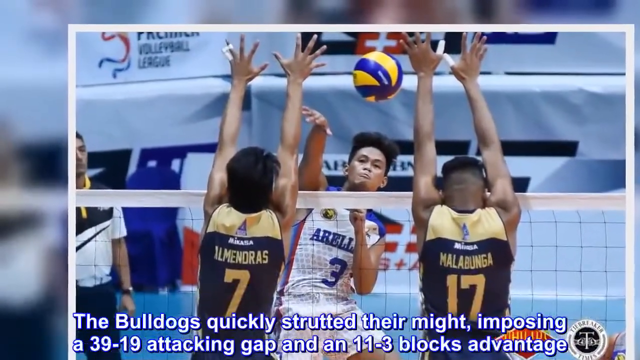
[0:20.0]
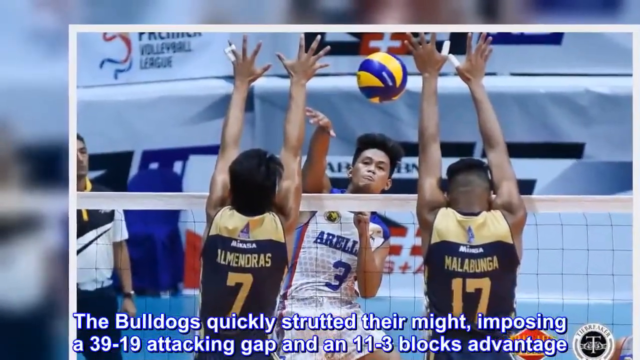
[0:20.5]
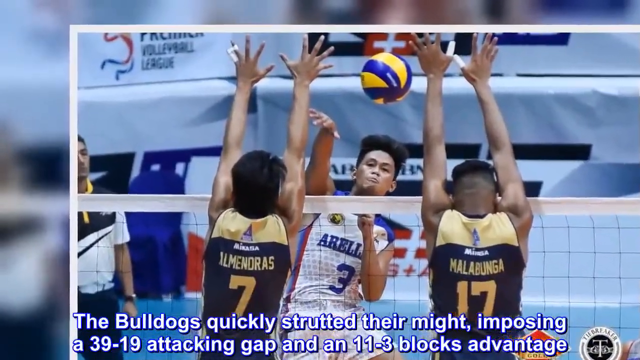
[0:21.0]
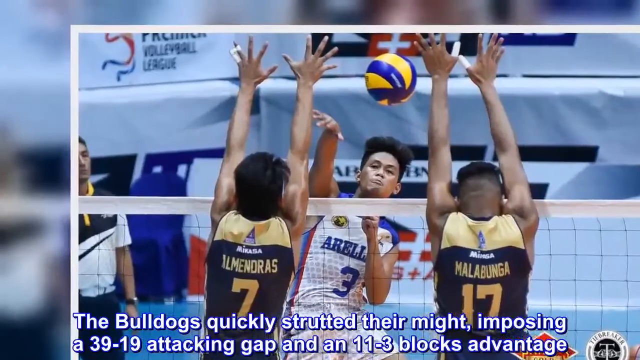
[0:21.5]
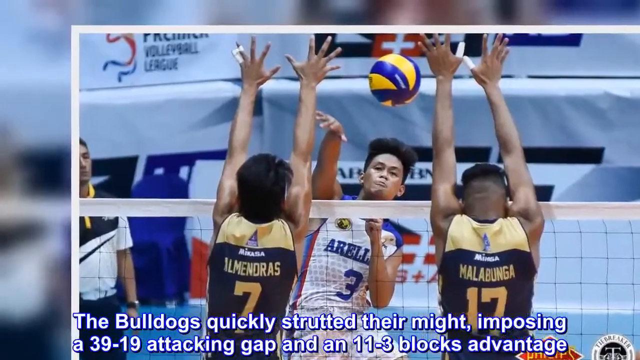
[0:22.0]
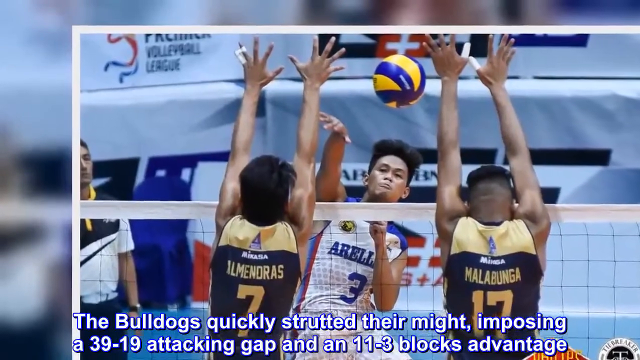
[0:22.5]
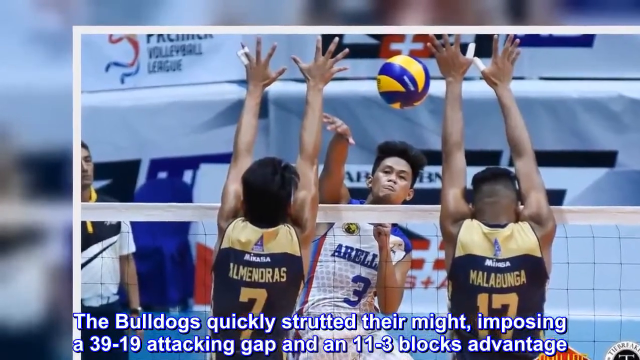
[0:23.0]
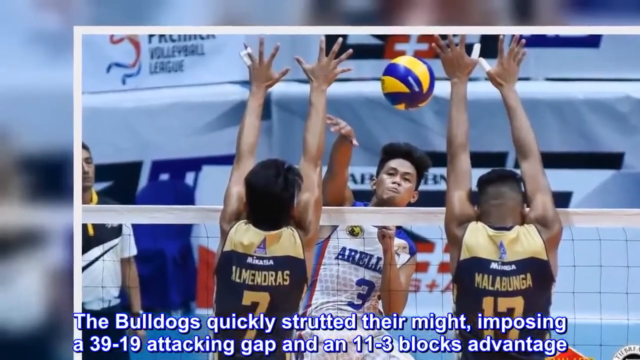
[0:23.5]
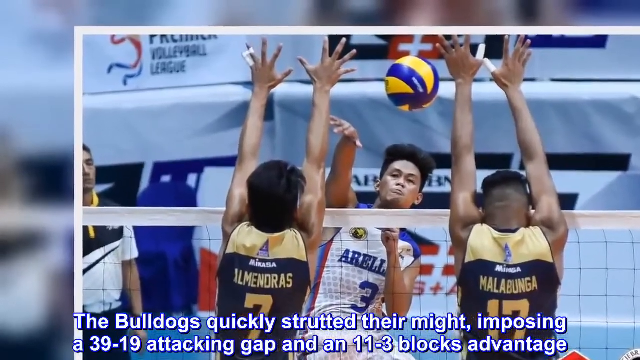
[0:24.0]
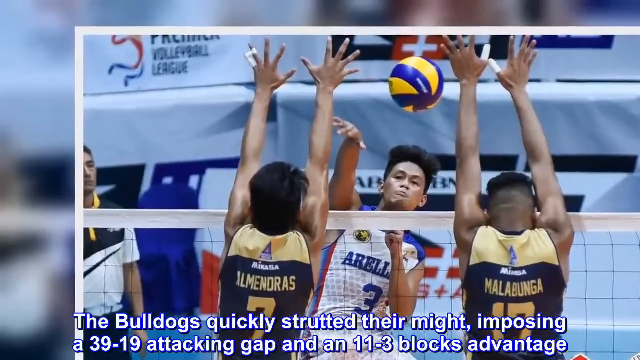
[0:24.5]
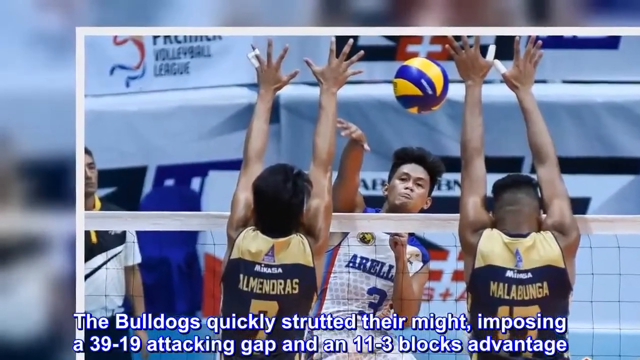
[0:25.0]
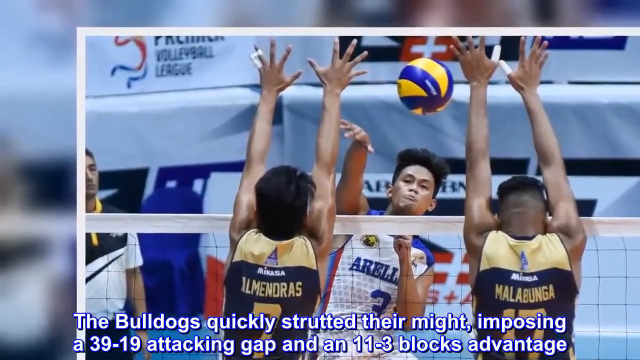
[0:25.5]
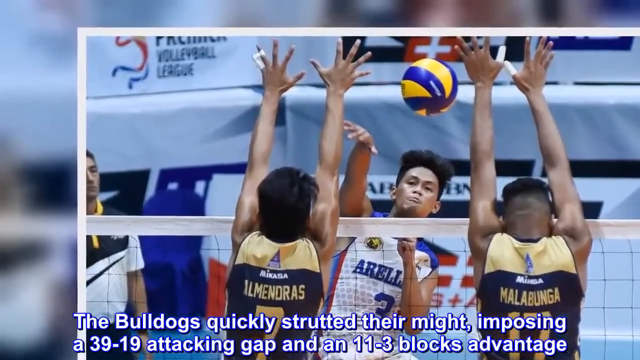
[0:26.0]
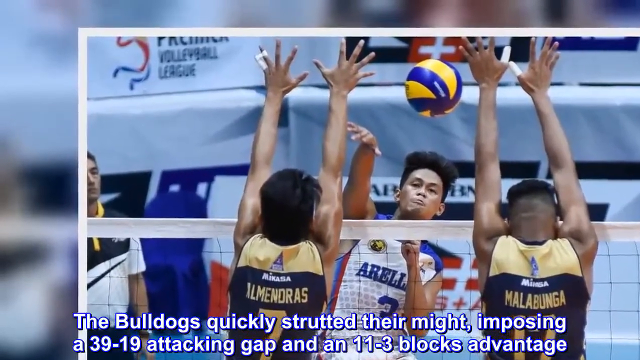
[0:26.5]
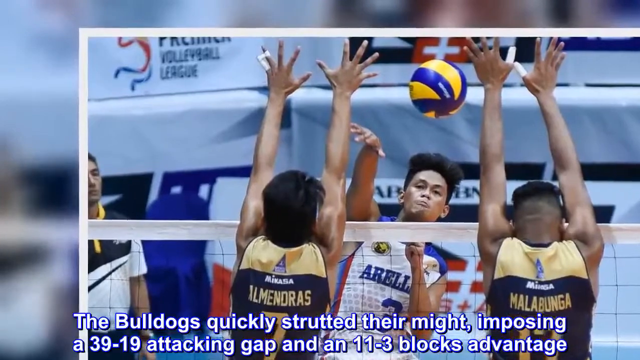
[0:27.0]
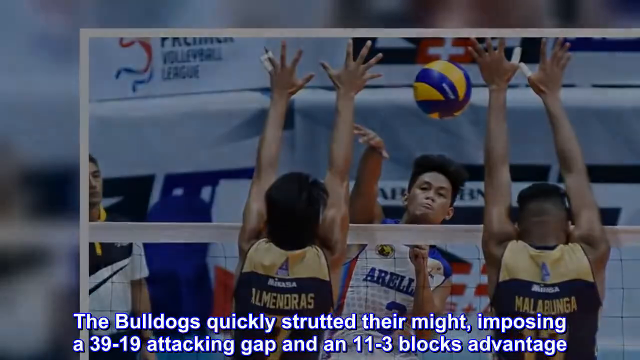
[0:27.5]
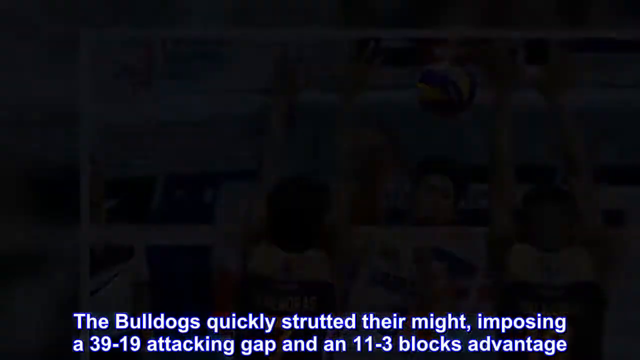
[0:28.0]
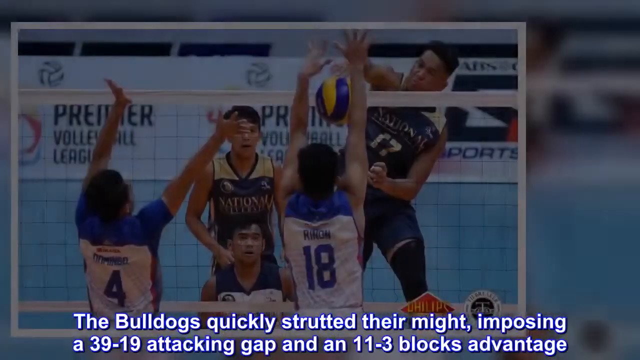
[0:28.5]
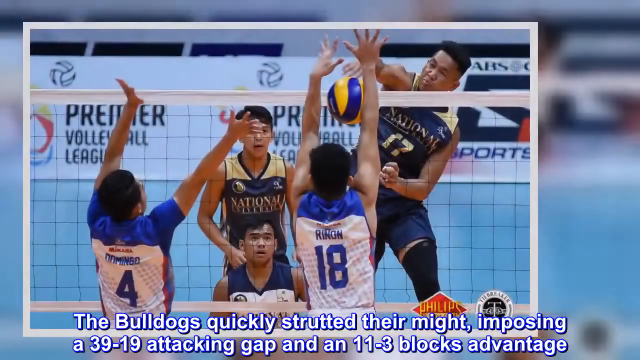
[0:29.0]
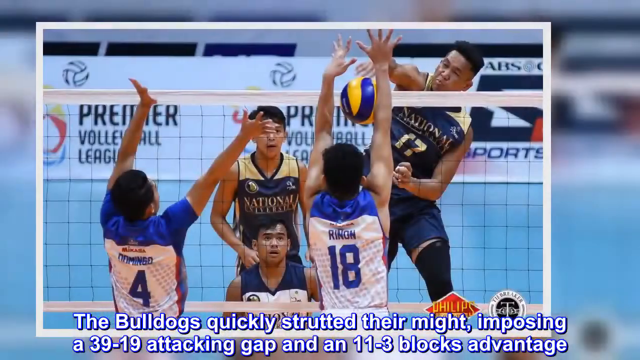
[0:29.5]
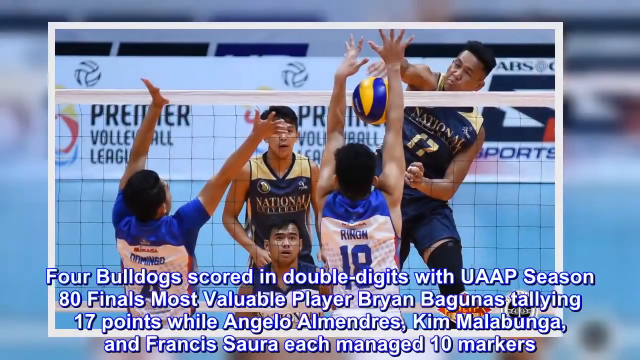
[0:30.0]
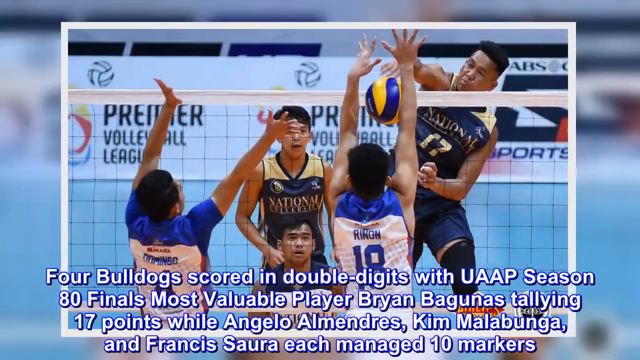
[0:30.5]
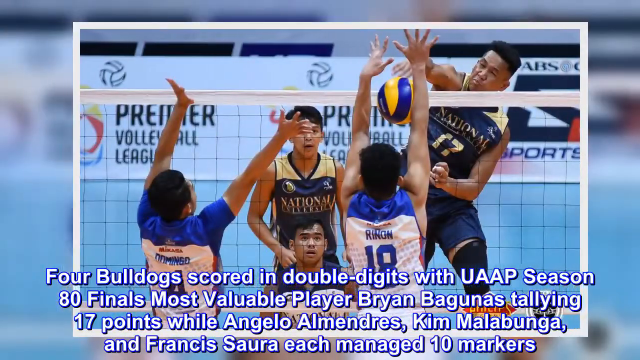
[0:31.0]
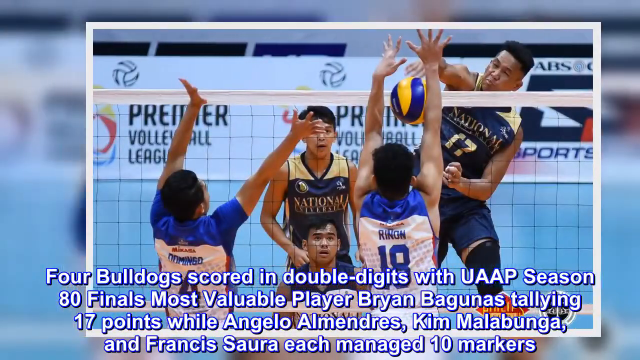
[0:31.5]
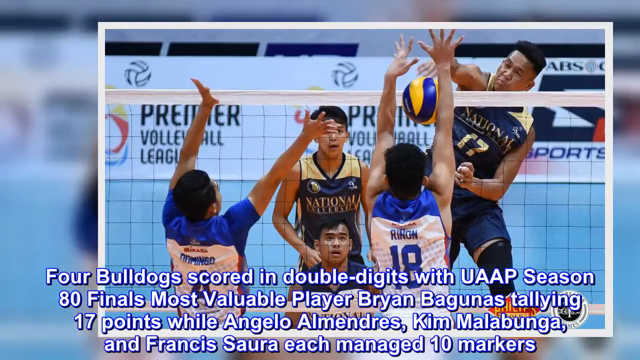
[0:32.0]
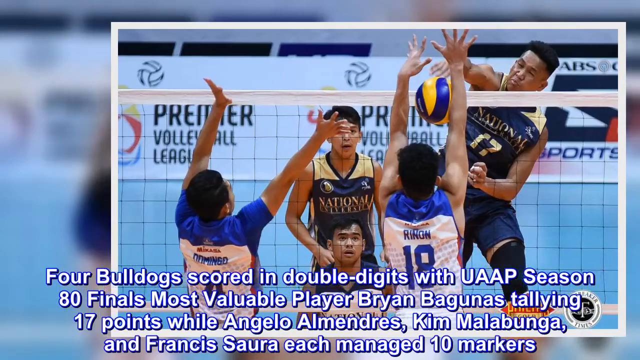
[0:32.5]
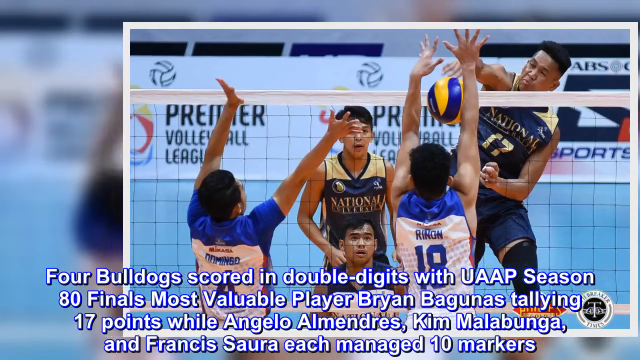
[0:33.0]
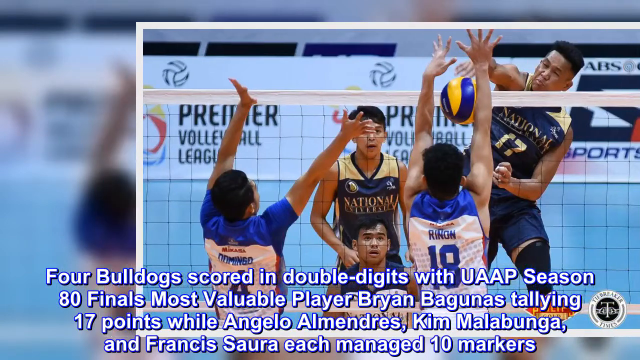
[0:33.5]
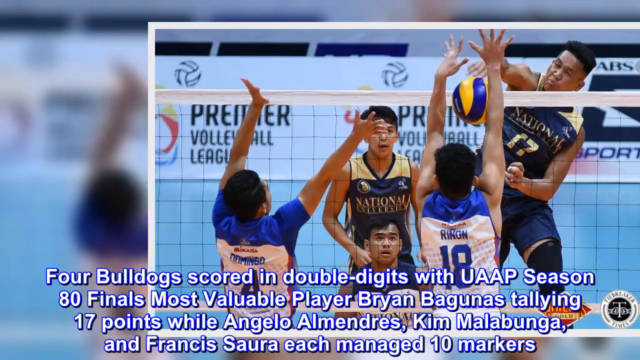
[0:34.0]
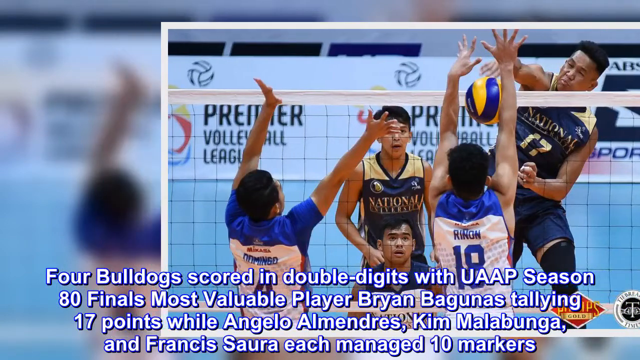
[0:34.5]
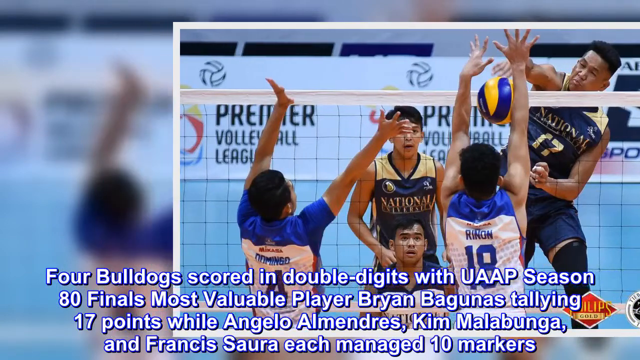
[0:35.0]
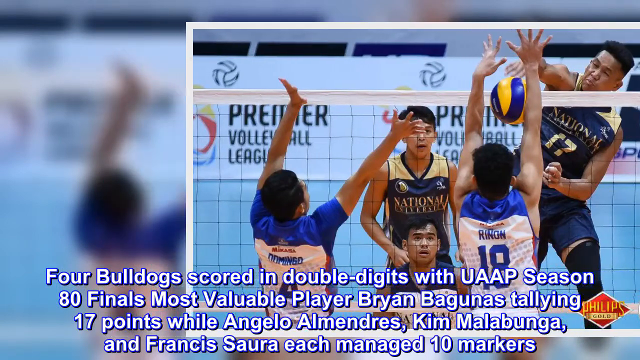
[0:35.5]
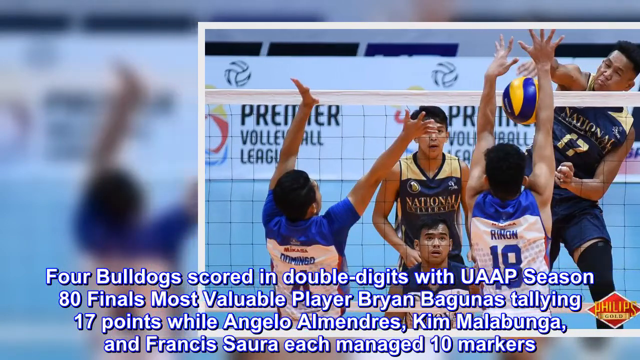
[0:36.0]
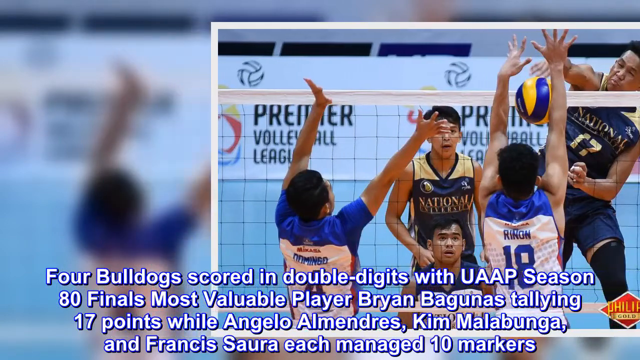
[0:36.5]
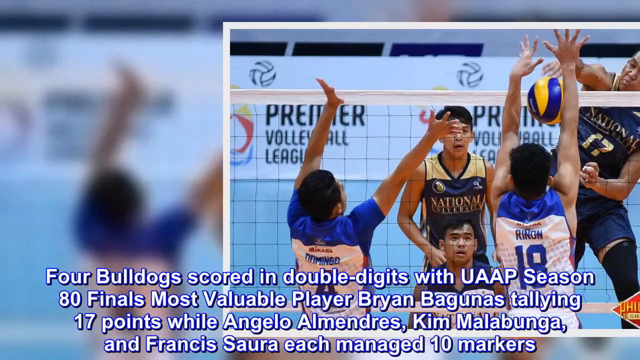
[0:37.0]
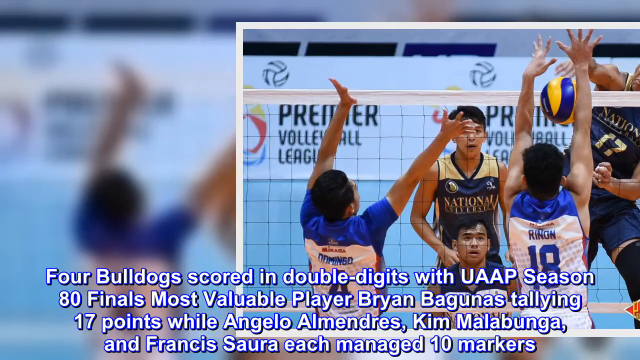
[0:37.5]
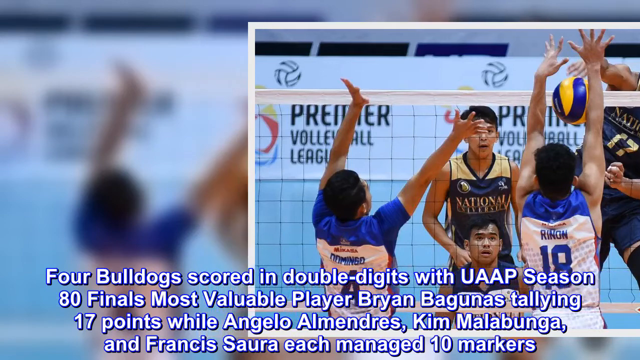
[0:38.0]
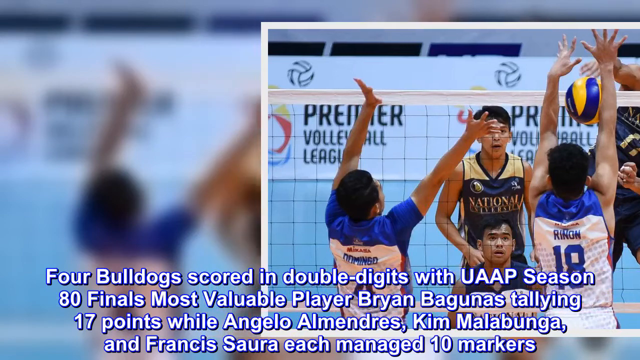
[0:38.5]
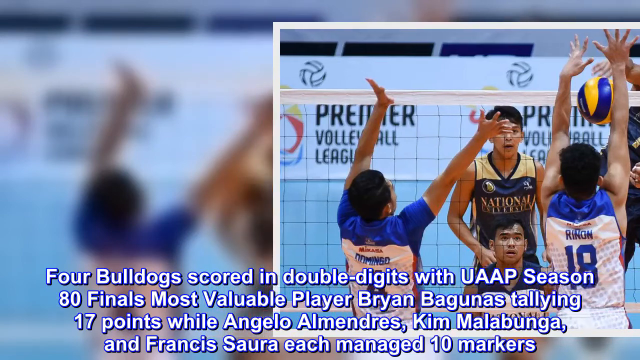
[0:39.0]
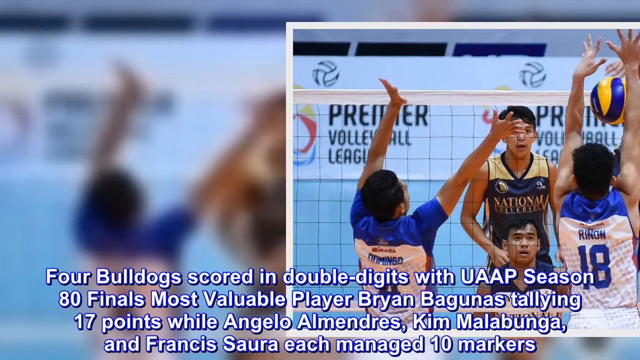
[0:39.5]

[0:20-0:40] Highlights from the match continue, with the black and gold team, labeled UAAP, facing the white and blue team of Aurelio University. Text at the bottom says: "The Bulldogs quickly strutted to their might, imposing a 39-19 attacking gap and an 11-3 blocks advantage." One of the pictures shows number 17 of the blue and gold UAAP team slamming the ball between the hands of number 18 of Aurelio University.